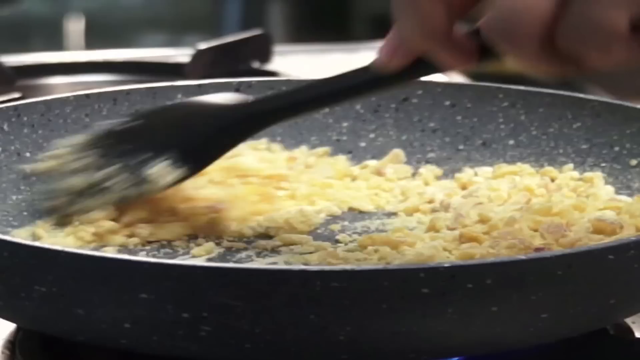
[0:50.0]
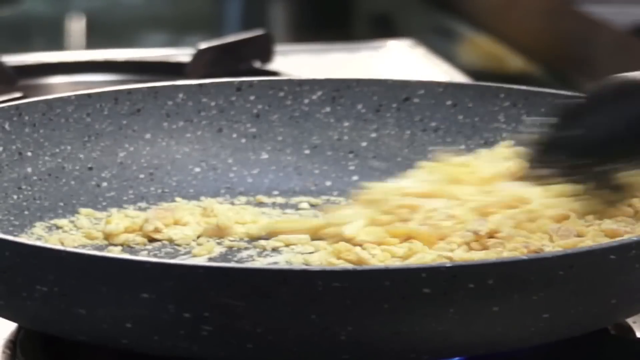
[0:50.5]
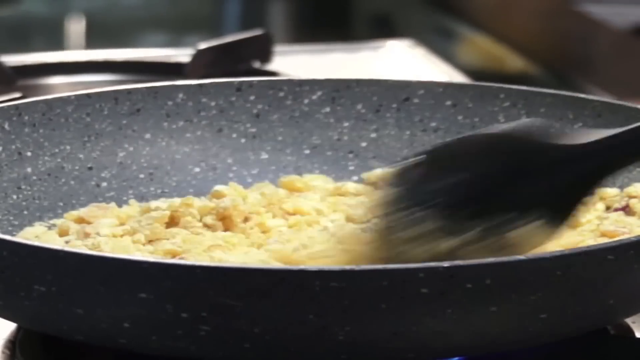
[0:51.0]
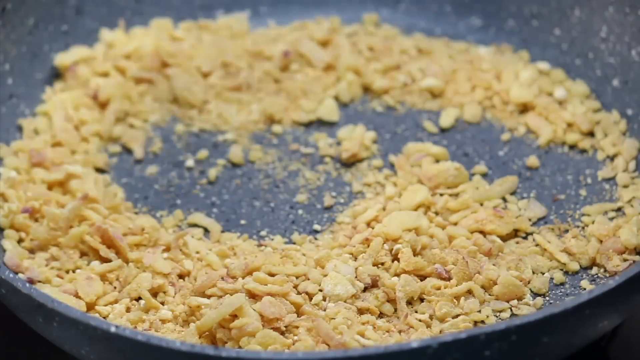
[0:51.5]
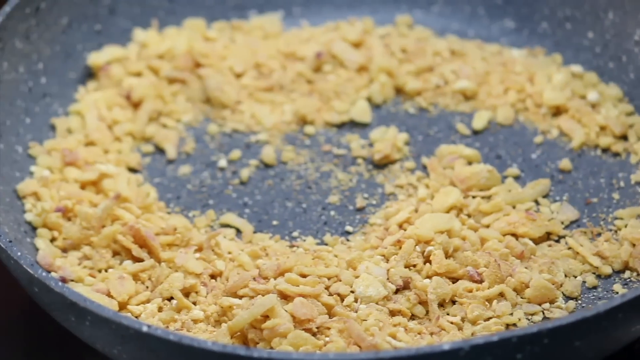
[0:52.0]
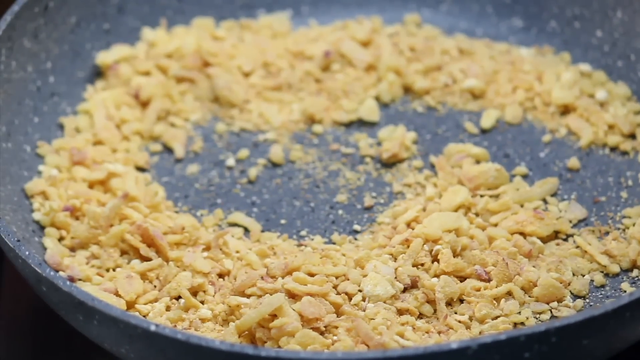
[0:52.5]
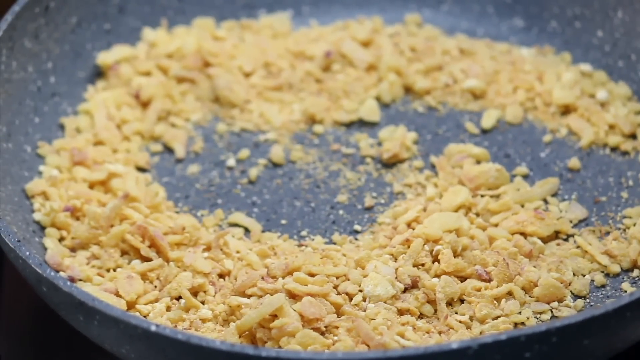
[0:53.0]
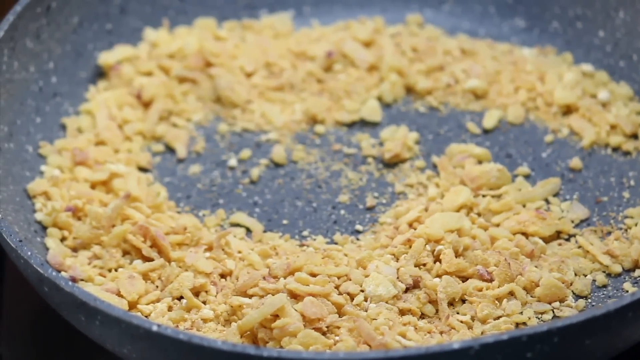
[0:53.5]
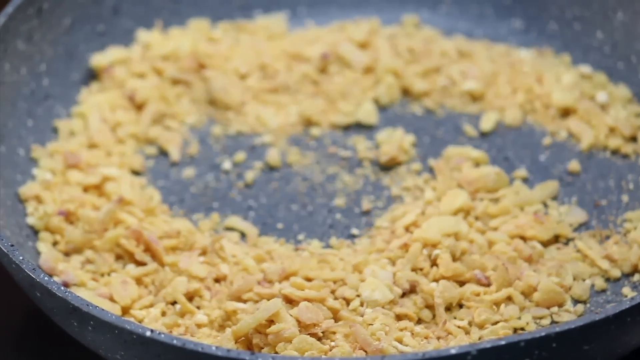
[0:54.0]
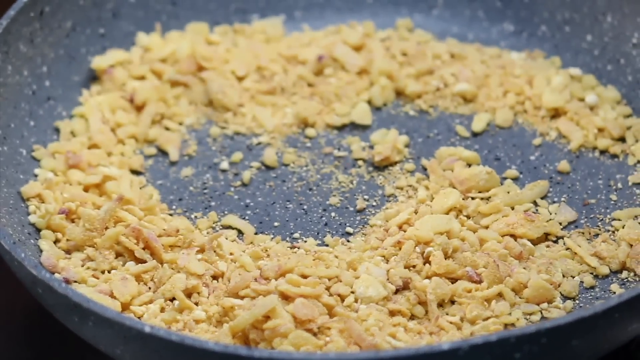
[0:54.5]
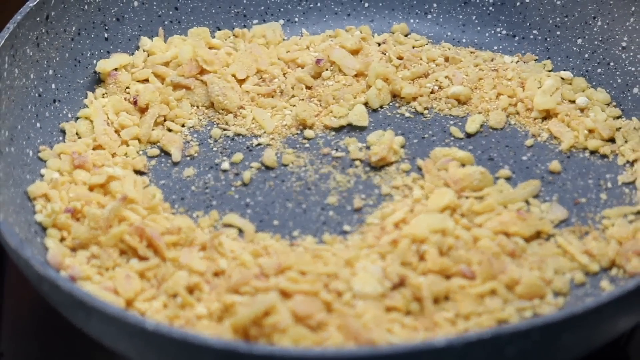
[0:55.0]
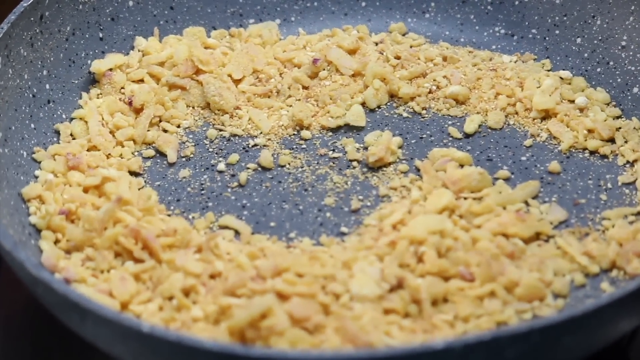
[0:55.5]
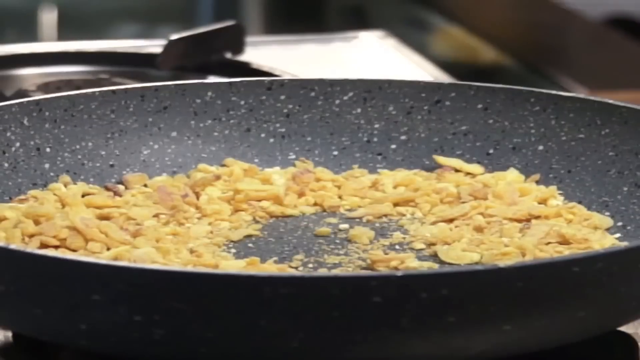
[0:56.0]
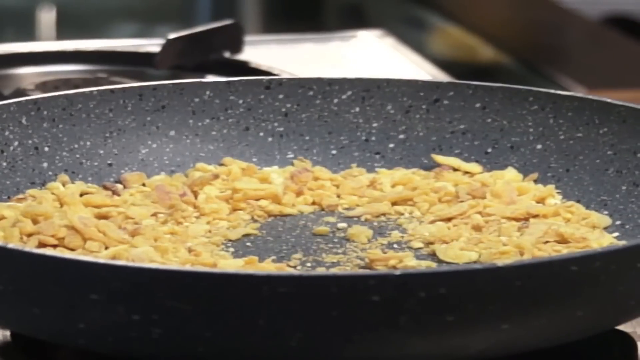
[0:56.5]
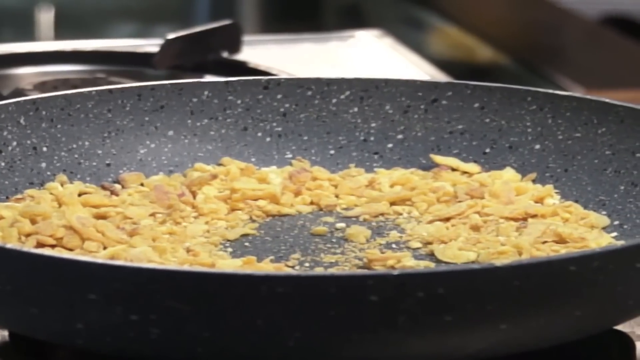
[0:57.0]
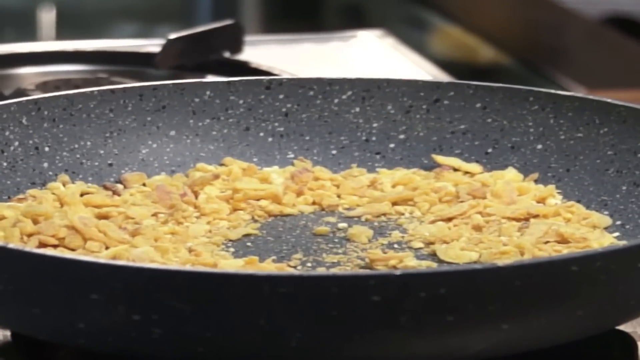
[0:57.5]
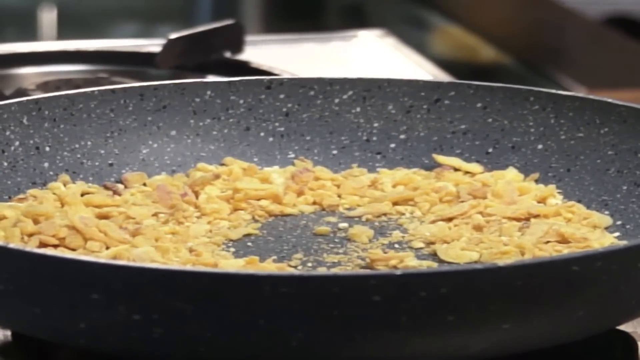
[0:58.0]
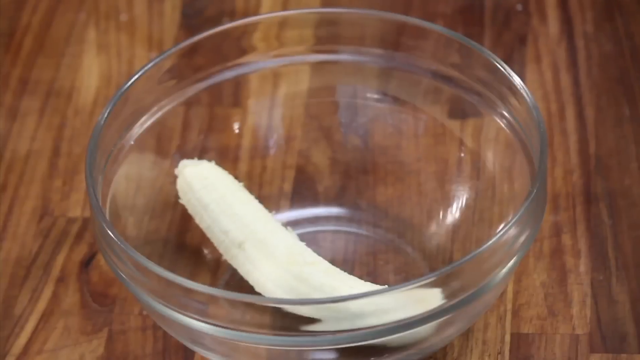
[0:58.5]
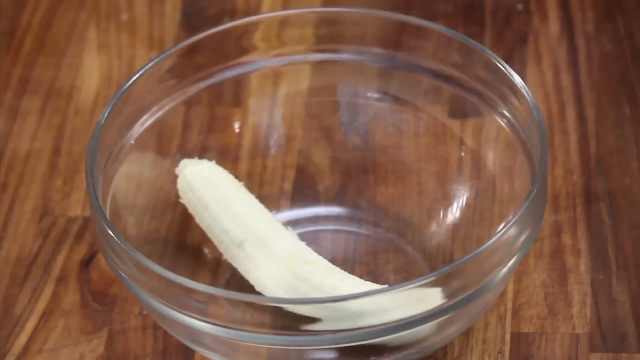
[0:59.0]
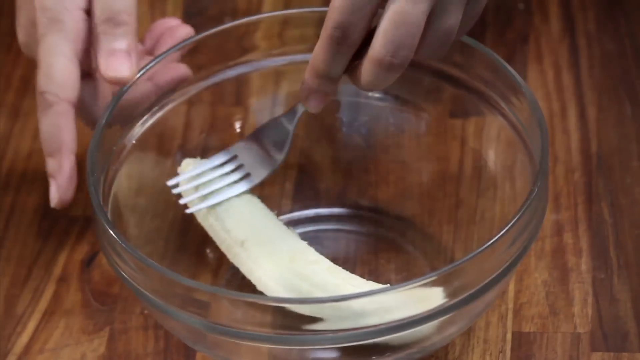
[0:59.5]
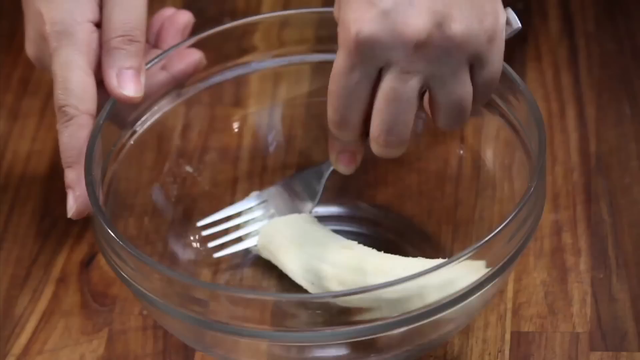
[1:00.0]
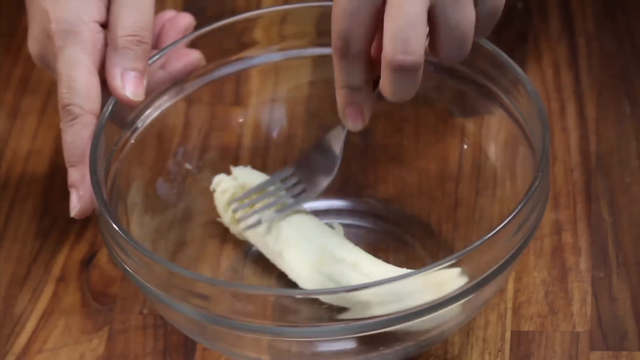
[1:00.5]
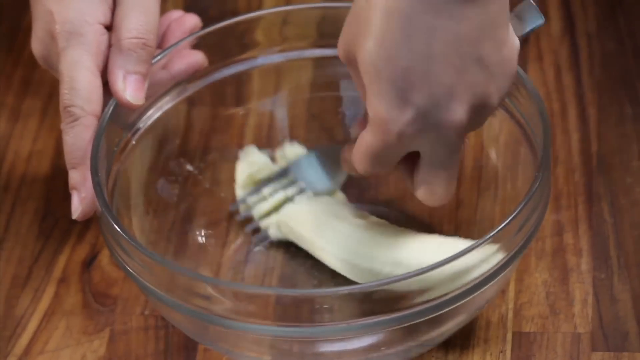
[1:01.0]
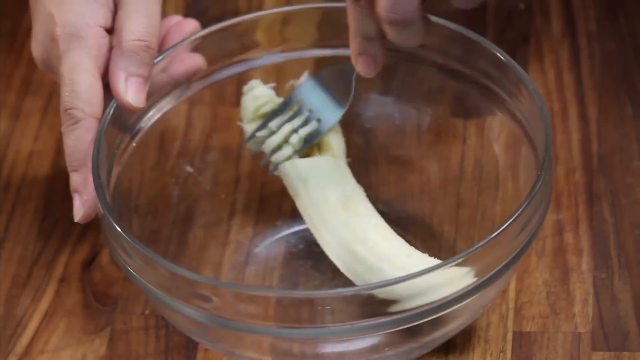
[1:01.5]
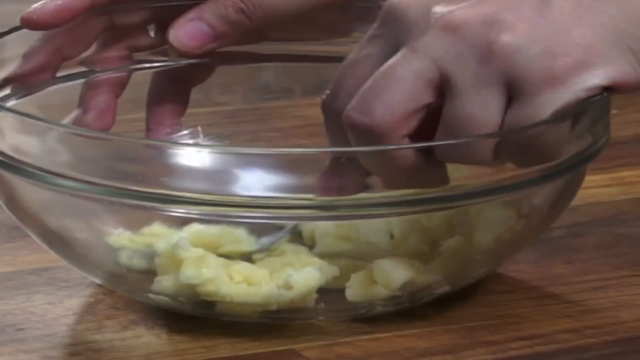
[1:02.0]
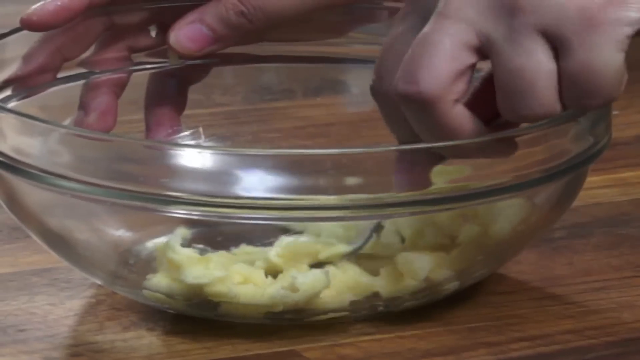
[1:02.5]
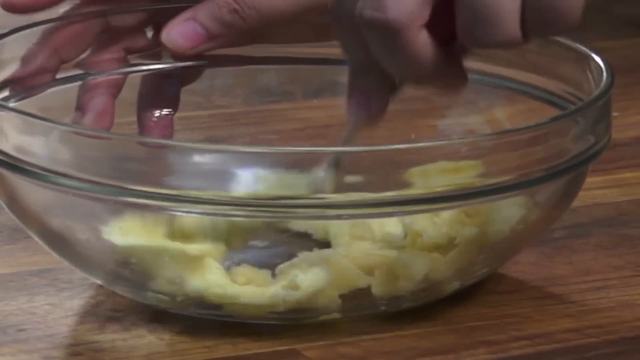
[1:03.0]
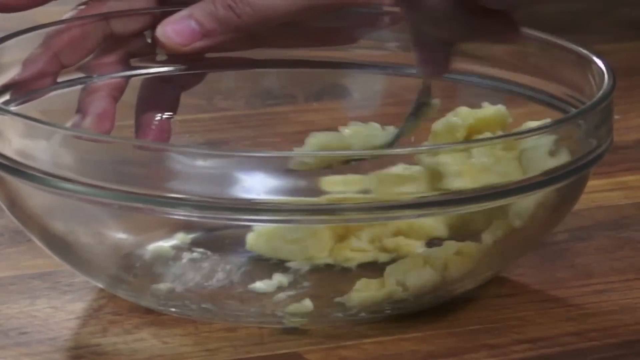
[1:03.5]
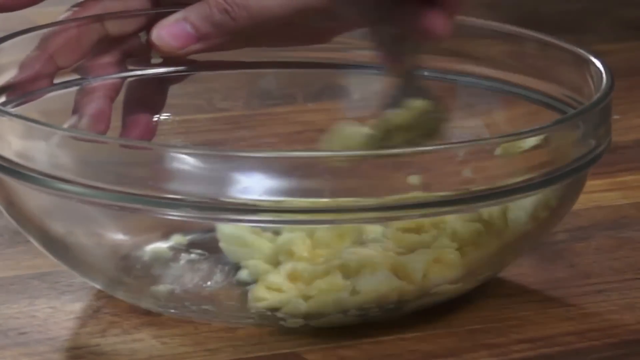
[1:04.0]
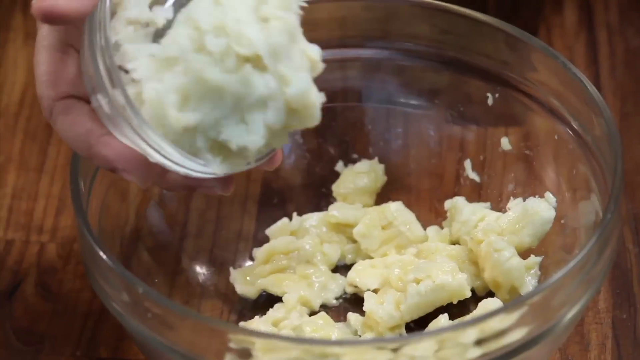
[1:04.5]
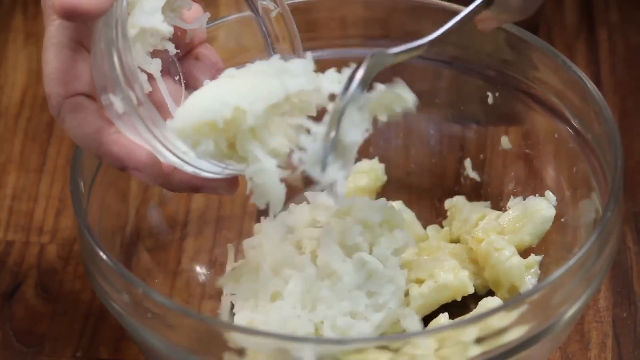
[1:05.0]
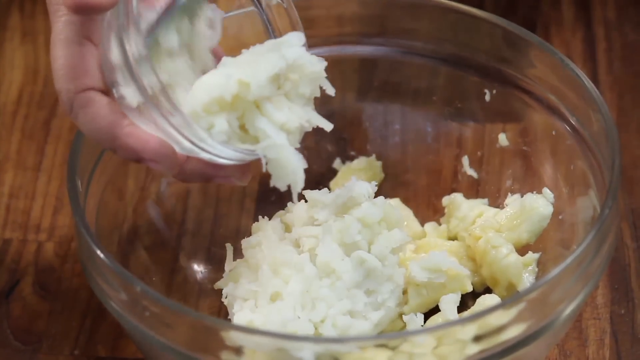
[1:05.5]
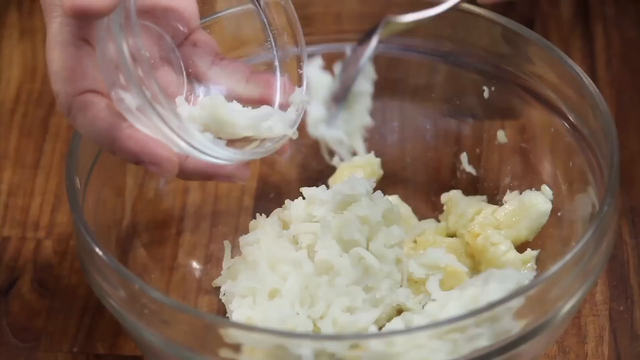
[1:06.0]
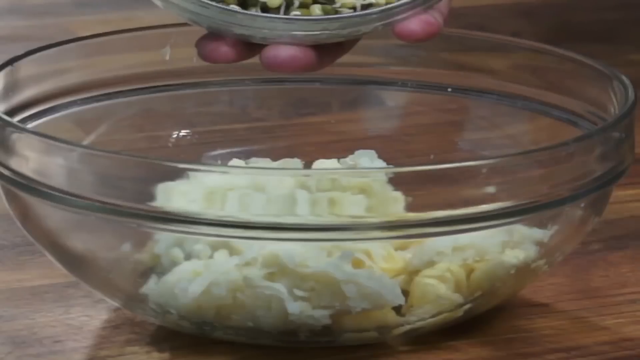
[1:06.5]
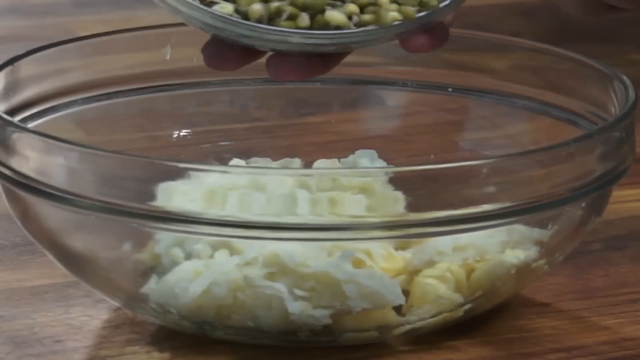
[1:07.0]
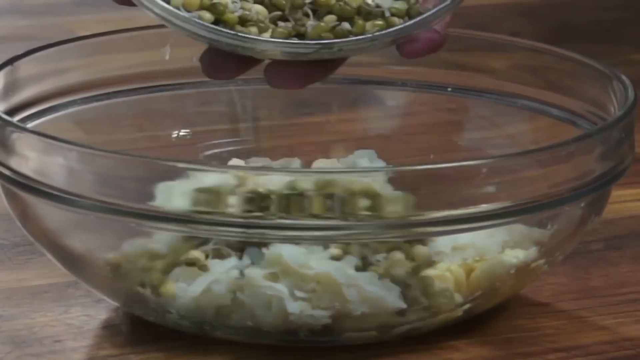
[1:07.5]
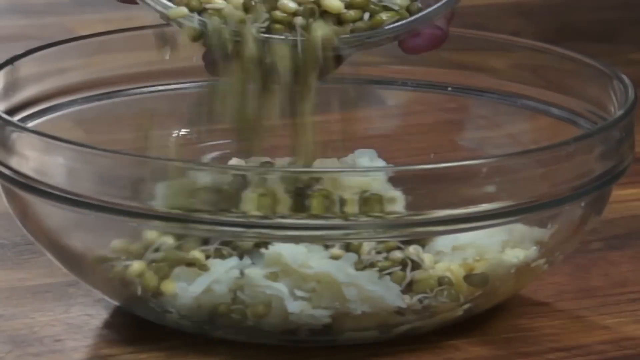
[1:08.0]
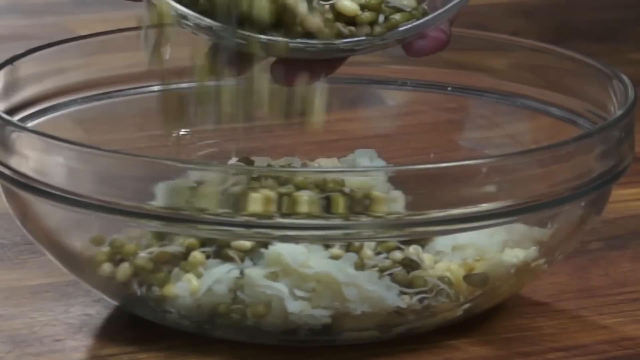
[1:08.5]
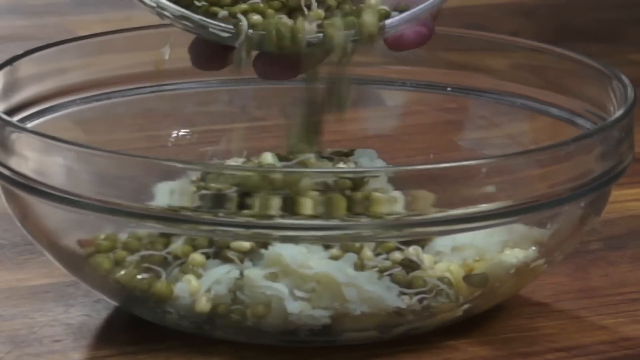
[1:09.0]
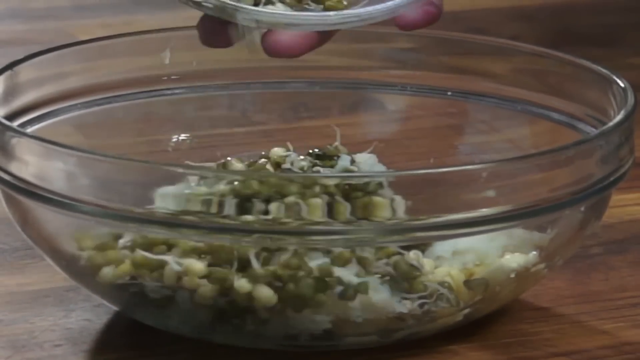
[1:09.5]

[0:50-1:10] A person mixes things up in the pan with a spatula; everything in it is kind of yellow and mixed together, and the pan mixture looks done. Next, the banana is shown: holding the bowl with the right hand and a fork in the left hand, the person mashes the banana. Holding the bowls with the right hand again, the person uses the left hand to mix the mashed potatoes and then the sprouts in with the banana. He holds the bowls cupped in his hand before pouring them in. Only one banana has been mixed in with everything.